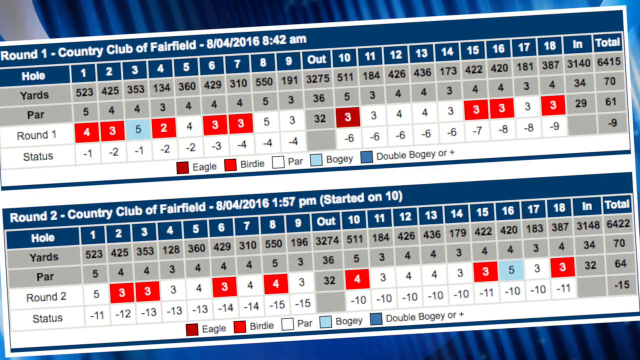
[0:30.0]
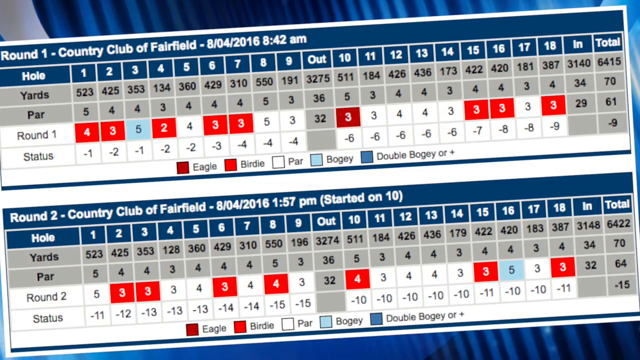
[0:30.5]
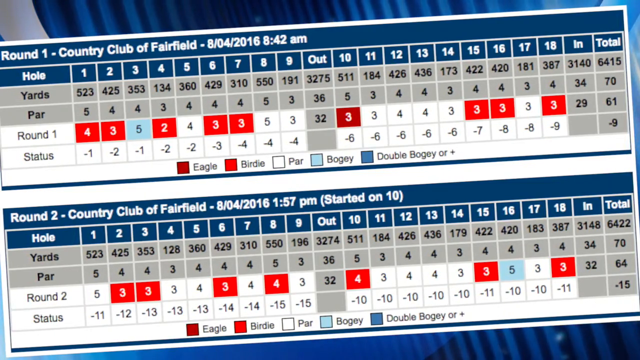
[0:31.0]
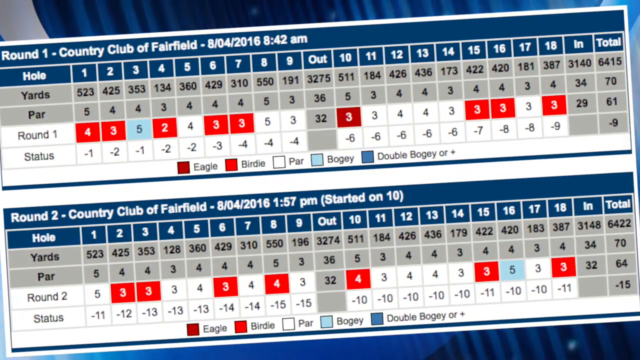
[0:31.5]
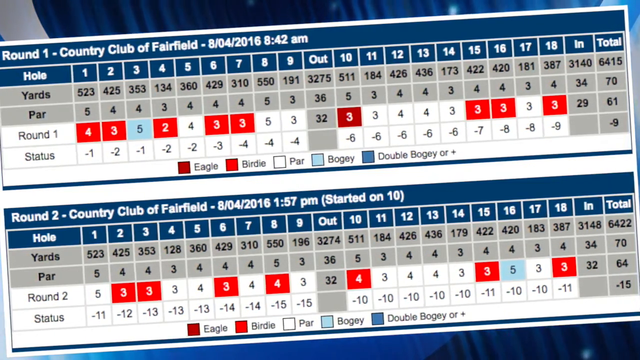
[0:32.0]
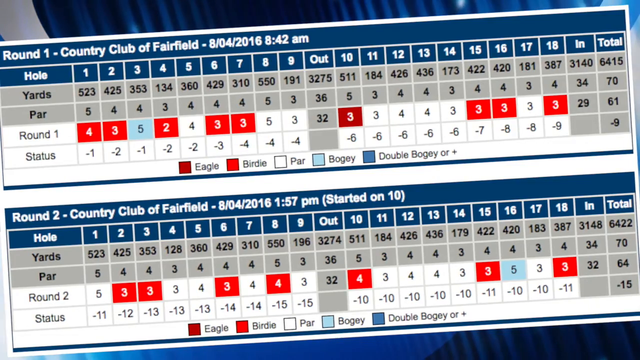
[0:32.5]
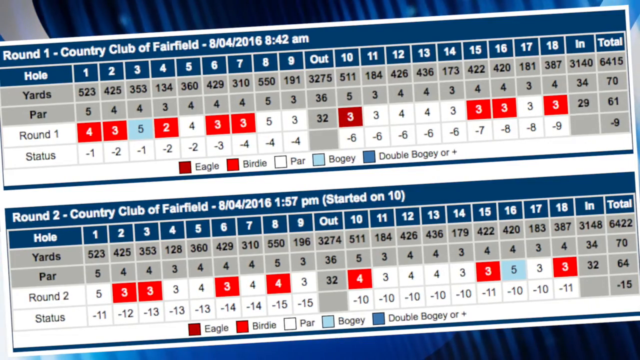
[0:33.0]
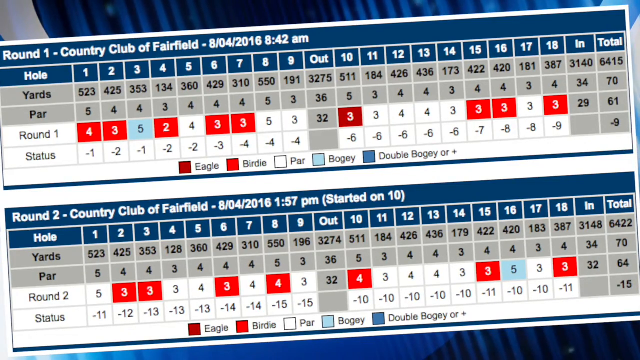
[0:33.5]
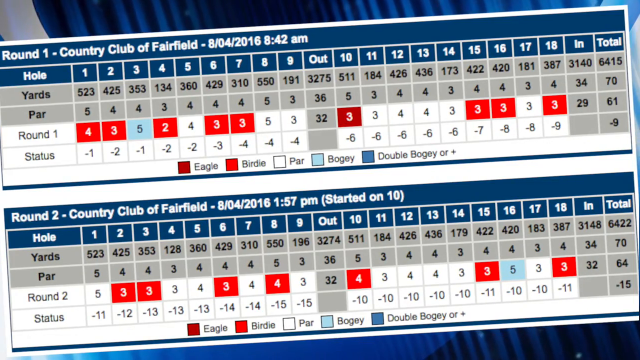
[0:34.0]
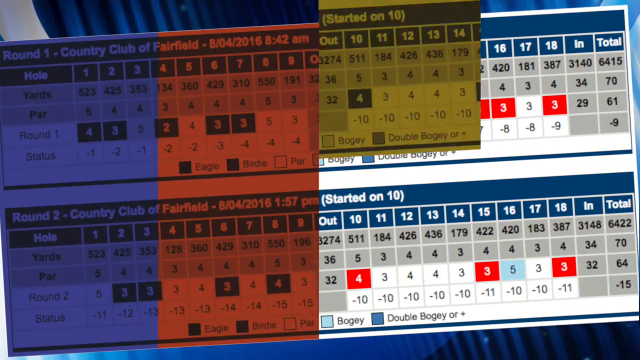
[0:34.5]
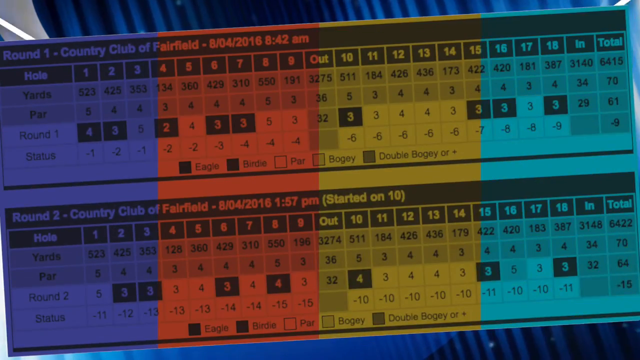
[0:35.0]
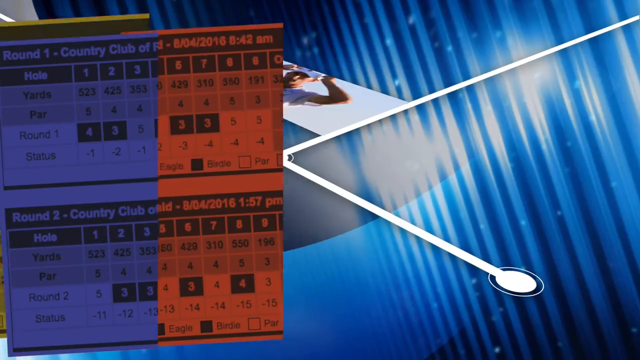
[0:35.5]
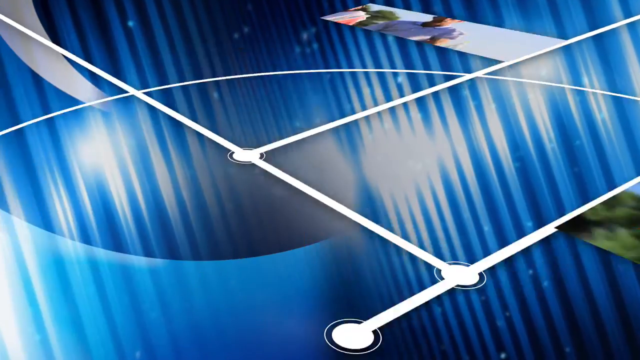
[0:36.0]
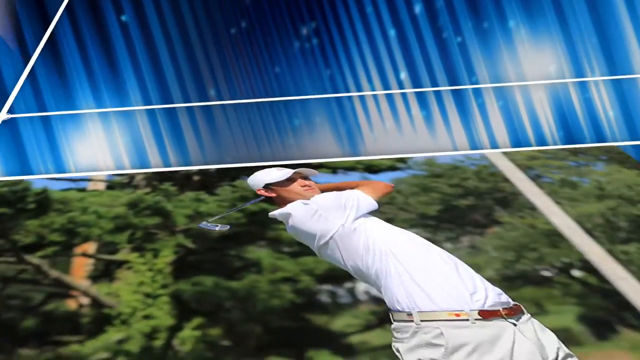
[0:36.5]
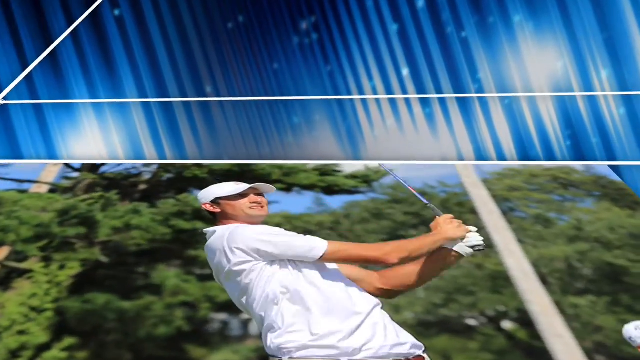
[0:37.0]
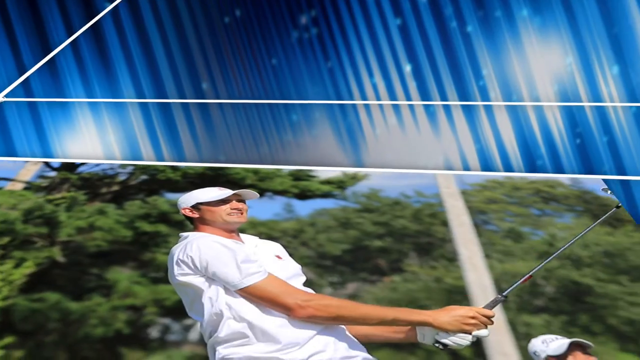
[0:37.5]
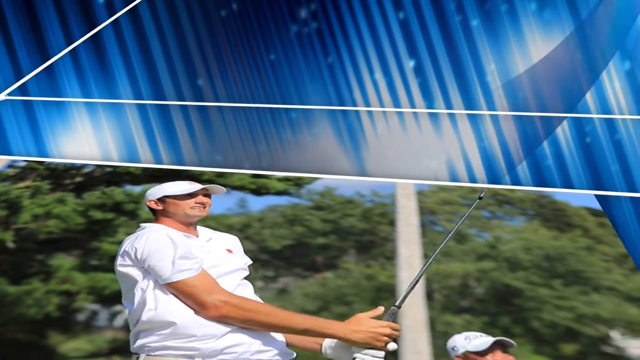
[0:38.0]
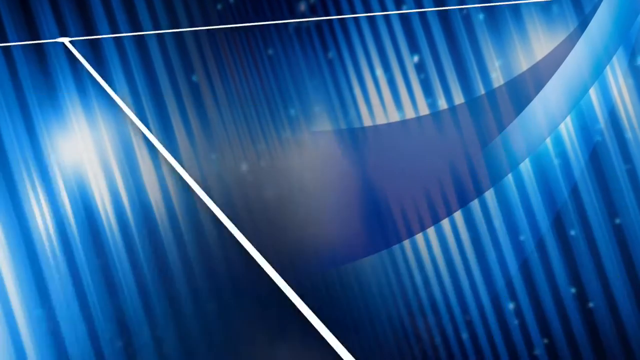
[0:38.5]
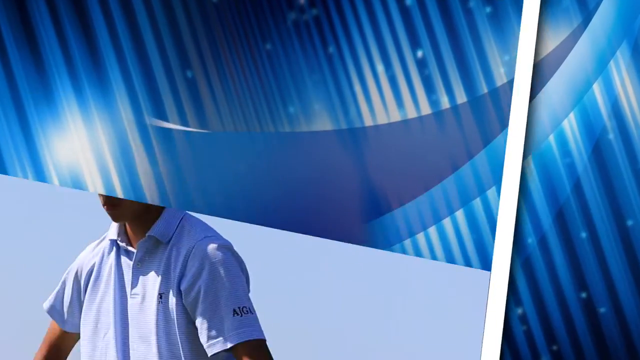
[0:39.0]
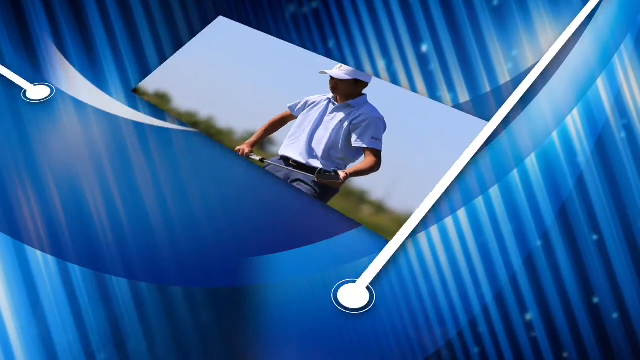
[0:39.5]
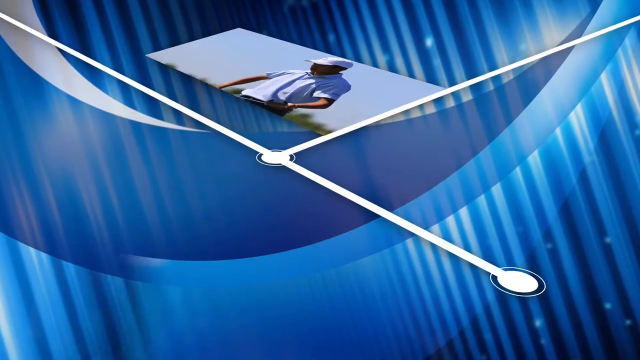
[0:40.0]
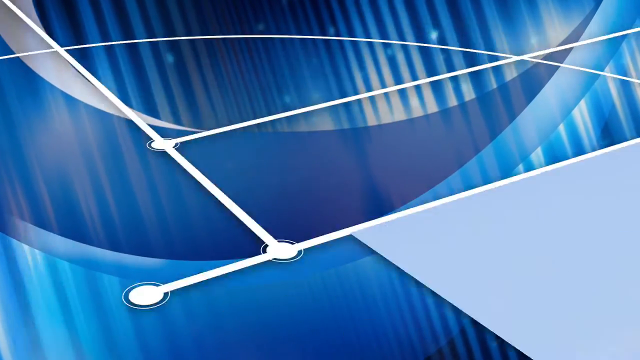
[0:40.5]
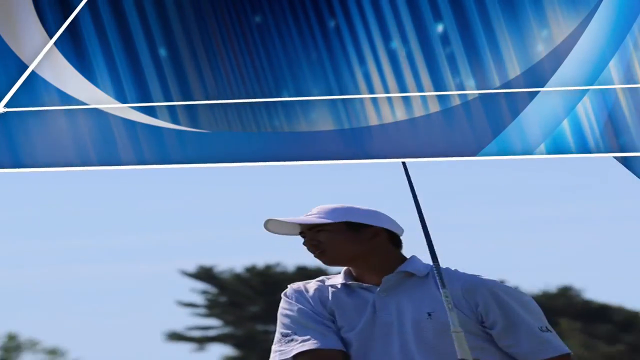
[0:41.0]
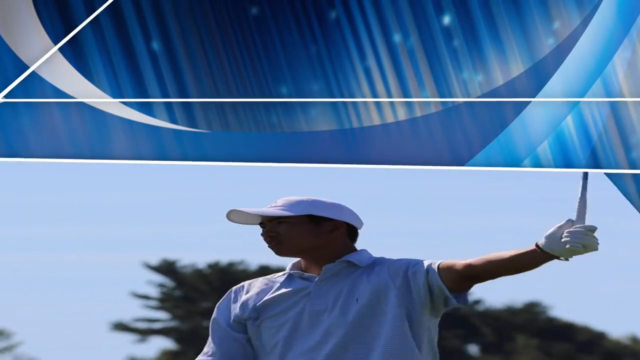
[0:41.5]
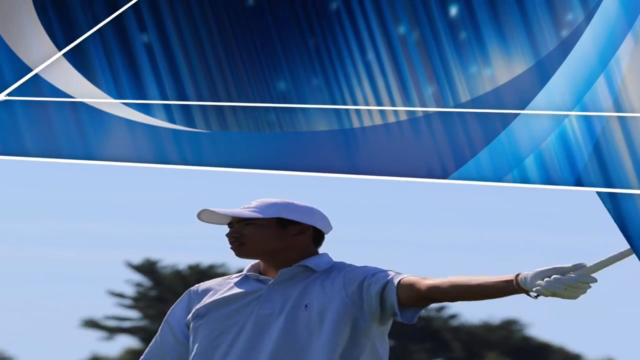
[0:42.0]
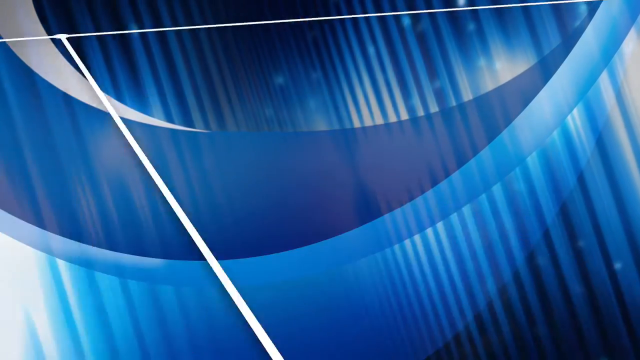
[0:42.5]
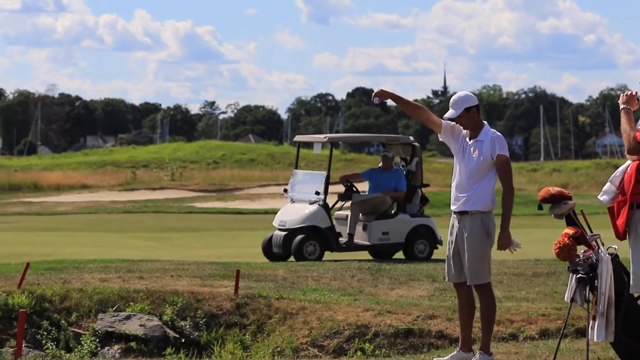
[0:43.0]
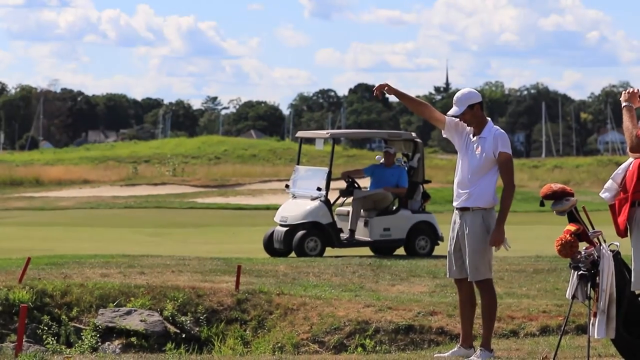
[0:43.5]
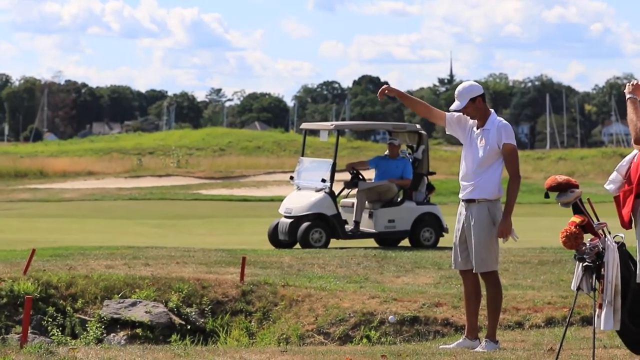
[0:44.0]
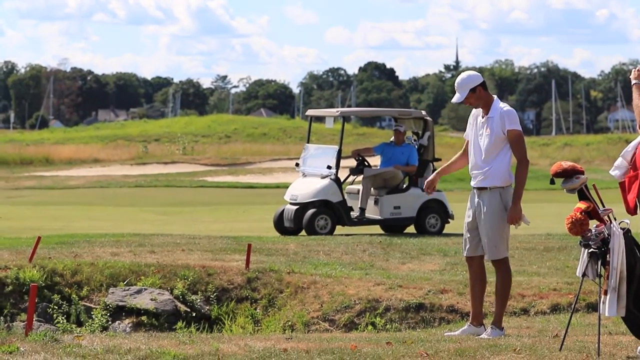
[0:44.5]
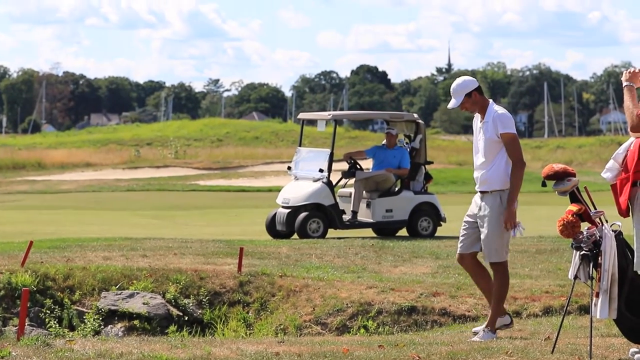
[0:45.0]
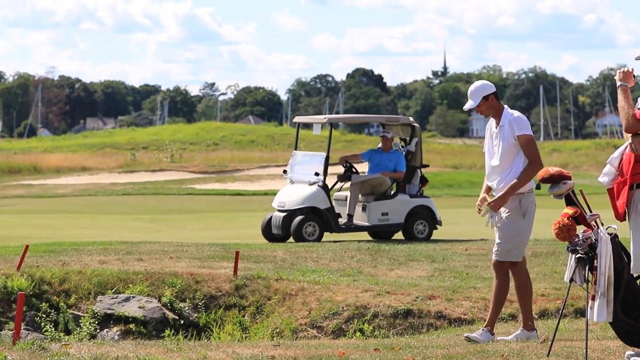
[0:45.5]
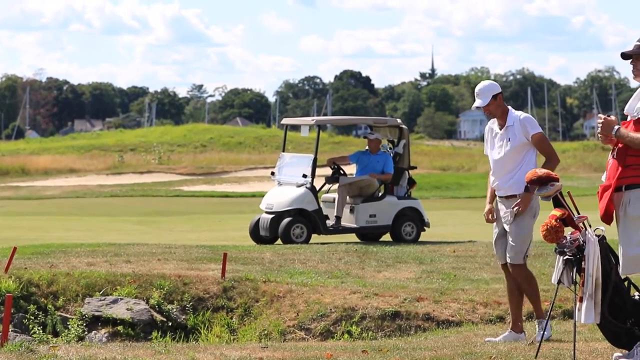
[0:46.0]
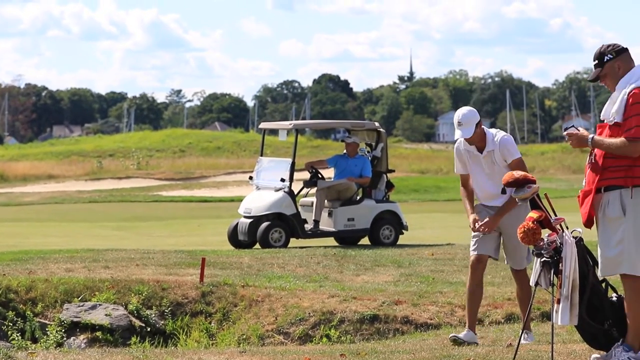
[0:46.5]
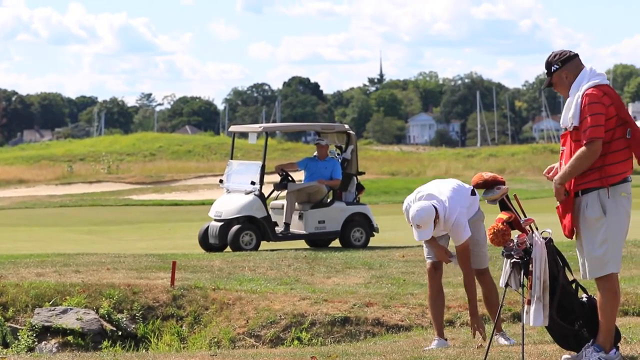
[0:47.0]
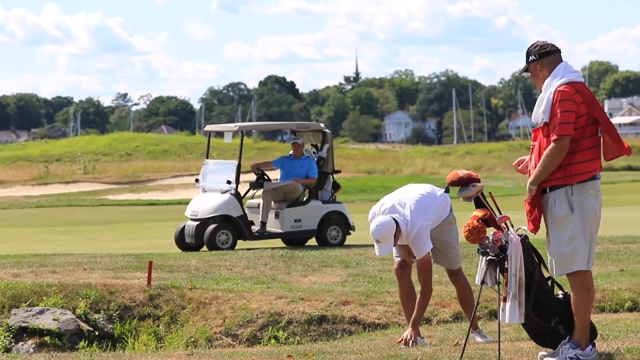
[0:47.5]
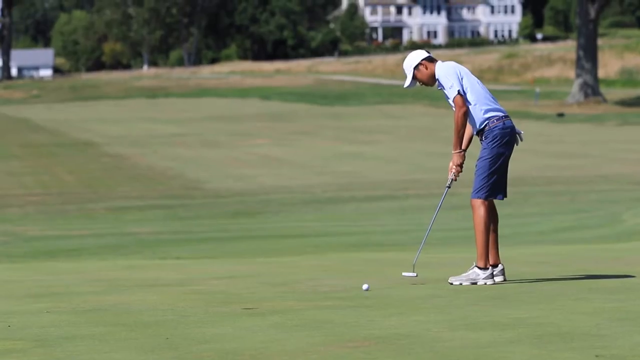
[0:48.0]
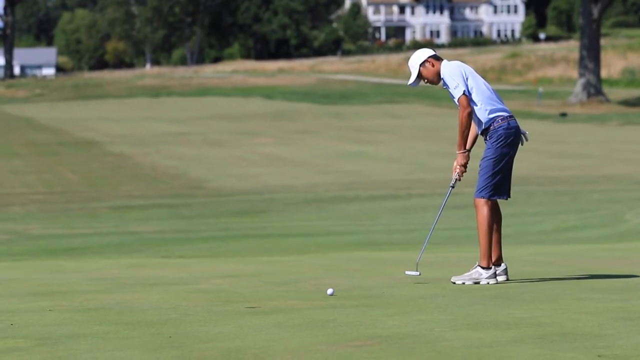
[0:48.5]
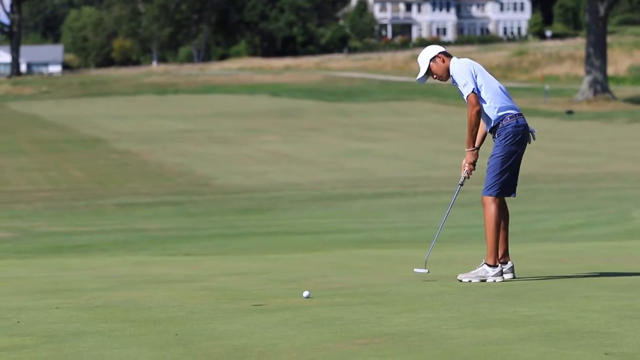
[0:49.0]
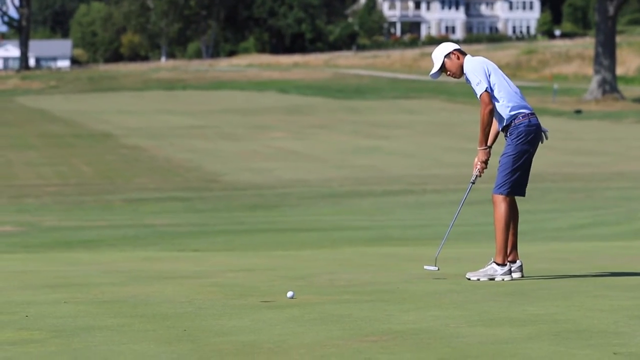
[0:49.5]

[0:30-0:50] The scorecard is still on screen. It is for Round 1 and Round 2 at the Country Club of Fairfield and gives the date and time, 8th April 2016 at 8.42am, along with Holes 1 through 18 and the scores in Round 1 and Round 2. A graphic then appears: it is flashy and shows kind of stretched imagery of golfers playing shots while transitioning between each other, and it looks quite dated. Another golfer drops something on the green, then a golfer wearing a white cap, a white polo shirt and blue shorts, with a putter in his hand, putts a white golf ball into the hole.